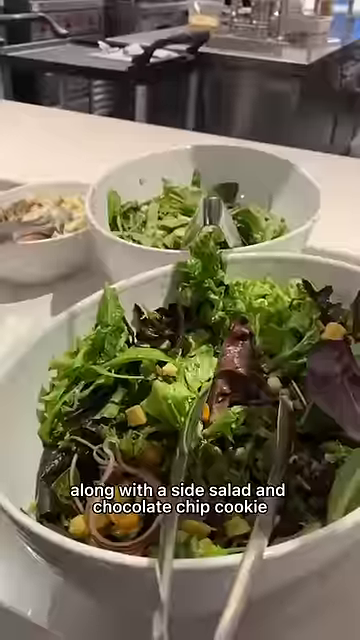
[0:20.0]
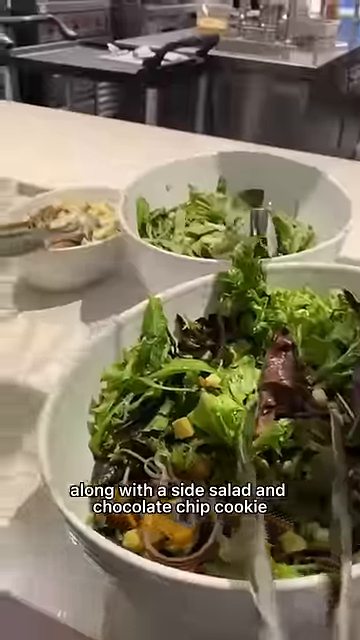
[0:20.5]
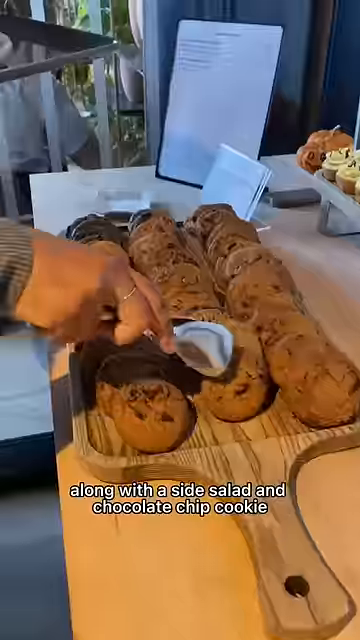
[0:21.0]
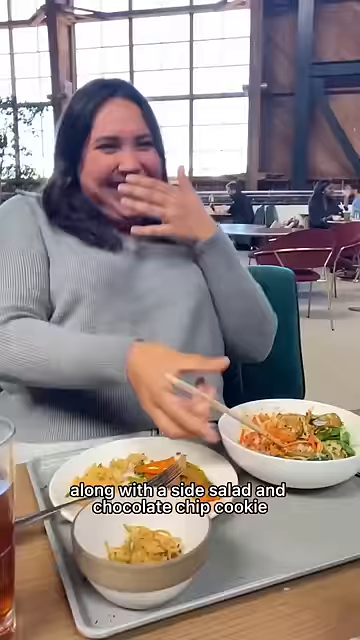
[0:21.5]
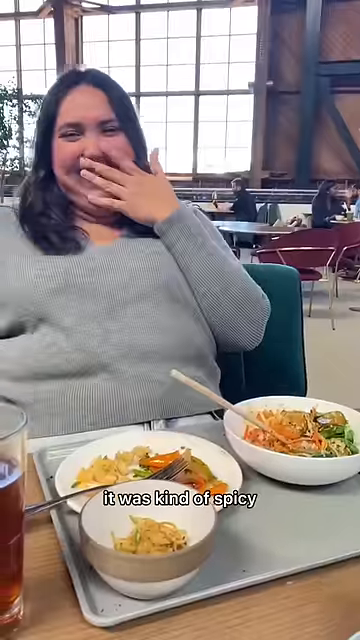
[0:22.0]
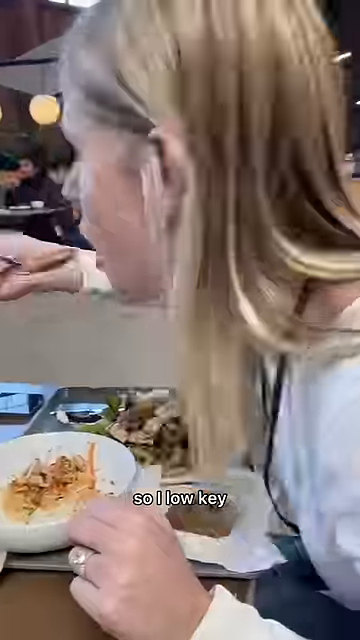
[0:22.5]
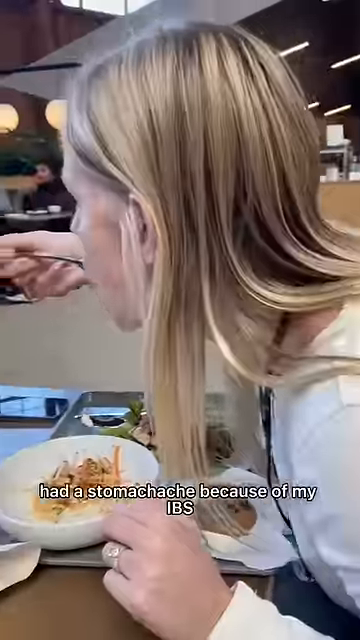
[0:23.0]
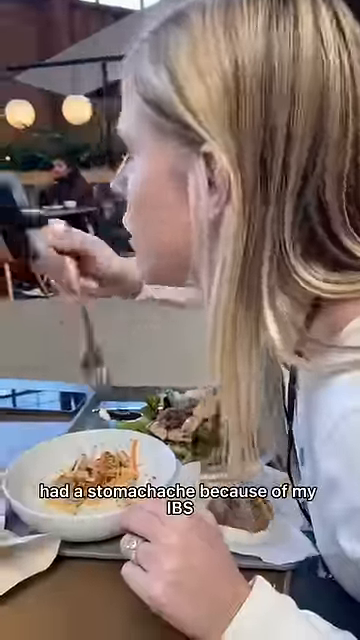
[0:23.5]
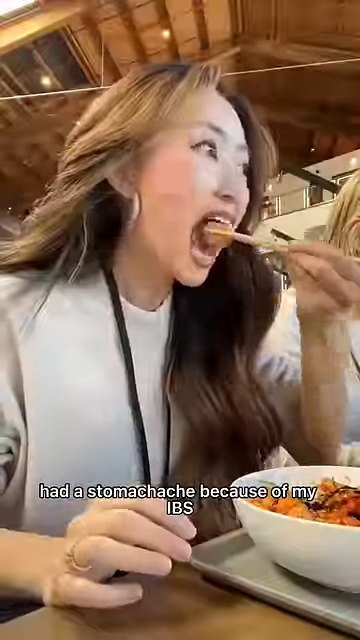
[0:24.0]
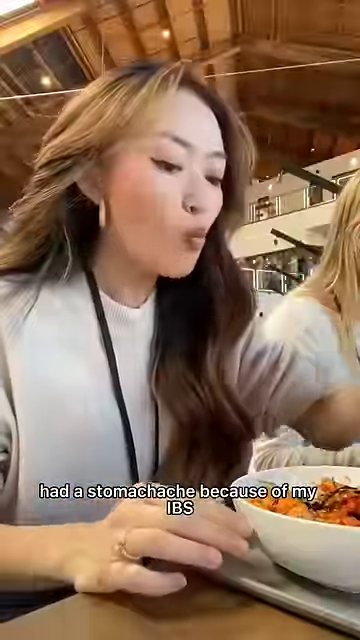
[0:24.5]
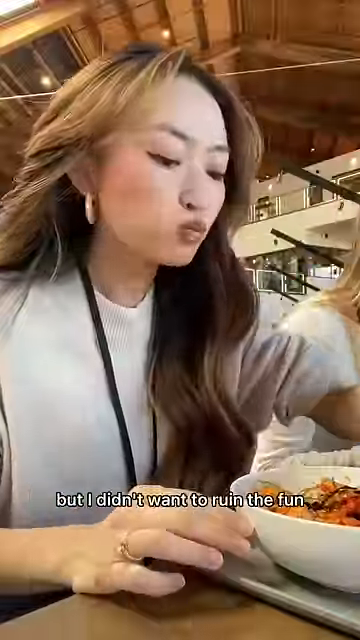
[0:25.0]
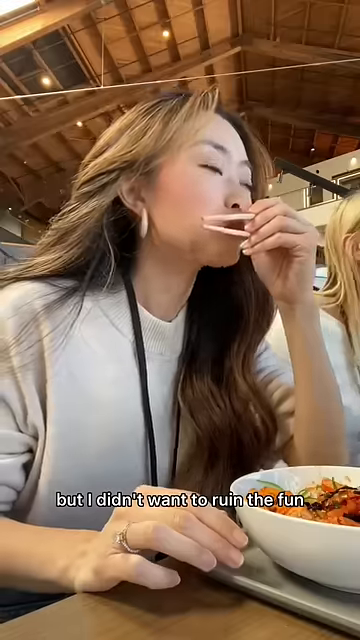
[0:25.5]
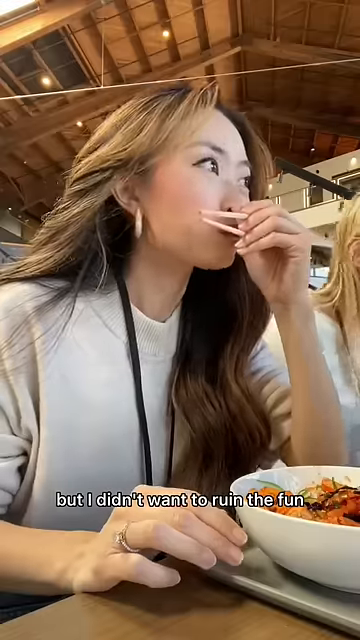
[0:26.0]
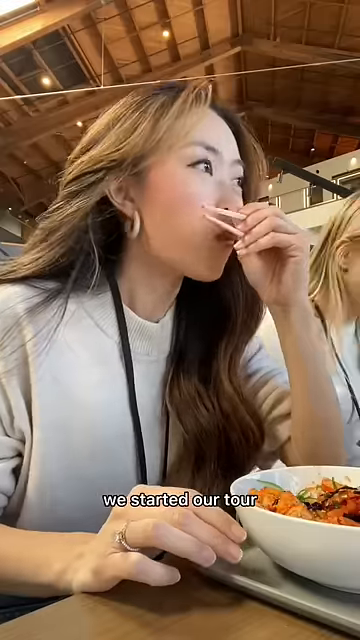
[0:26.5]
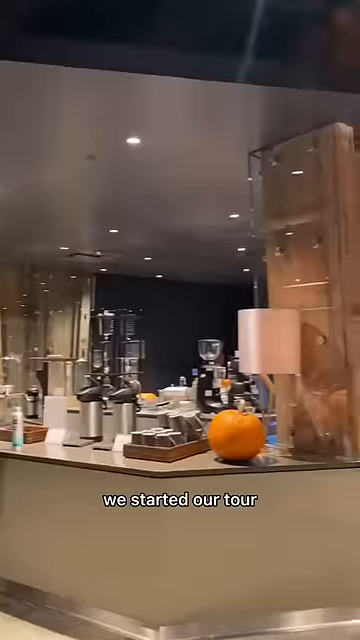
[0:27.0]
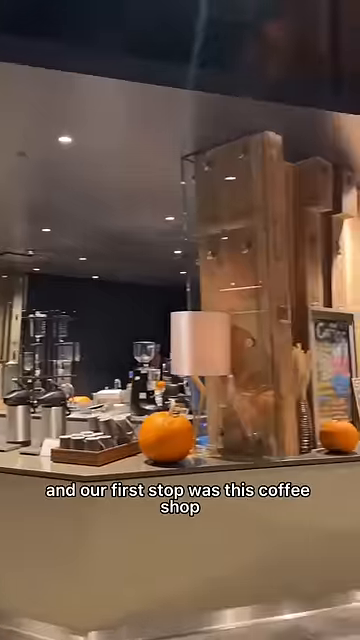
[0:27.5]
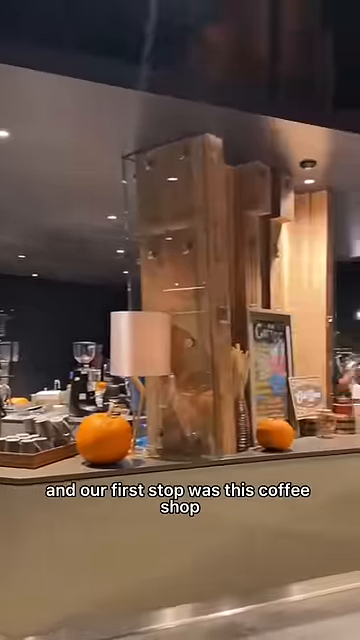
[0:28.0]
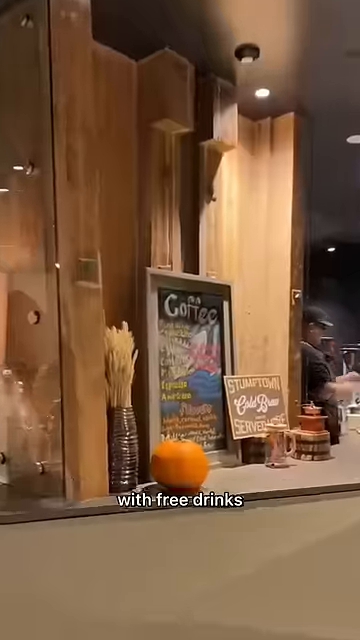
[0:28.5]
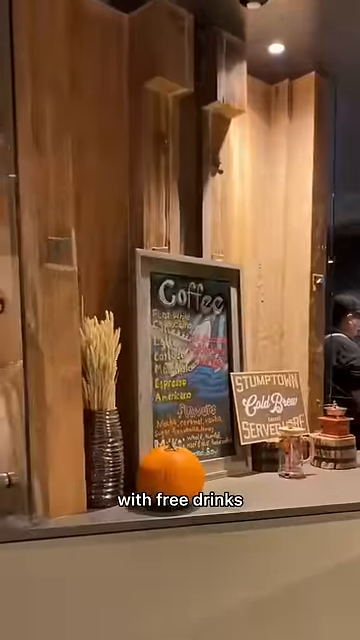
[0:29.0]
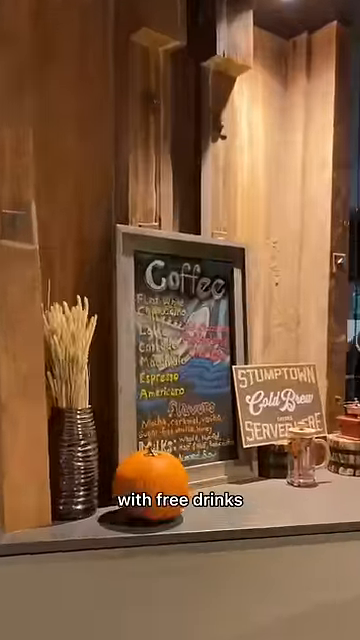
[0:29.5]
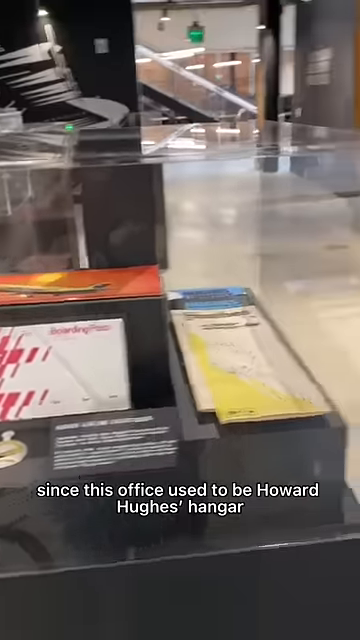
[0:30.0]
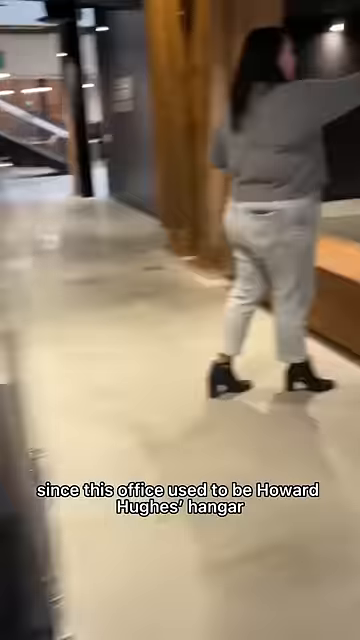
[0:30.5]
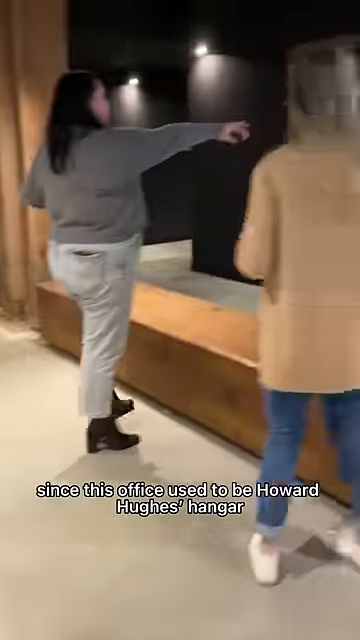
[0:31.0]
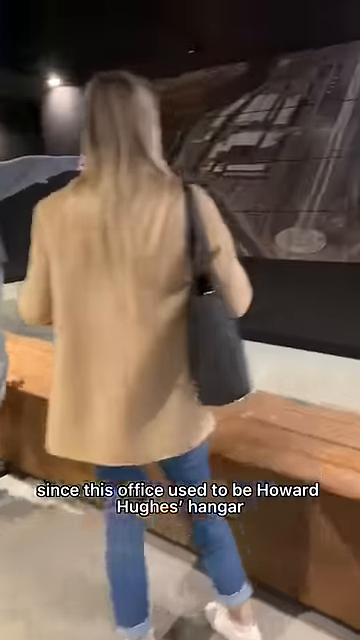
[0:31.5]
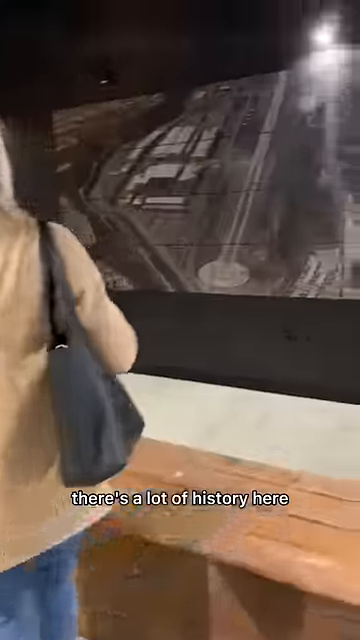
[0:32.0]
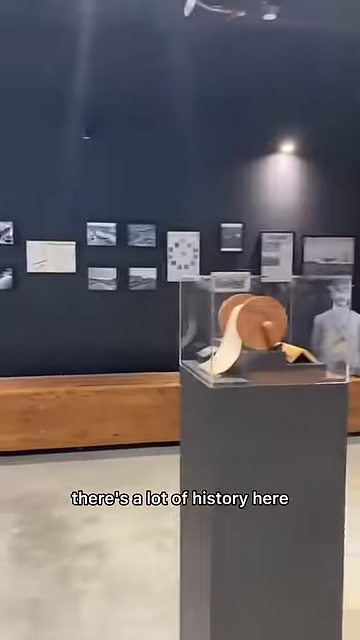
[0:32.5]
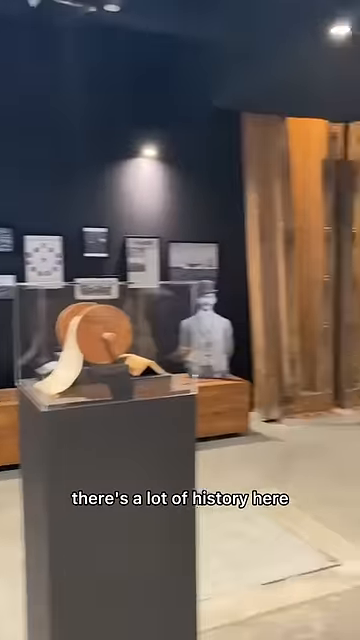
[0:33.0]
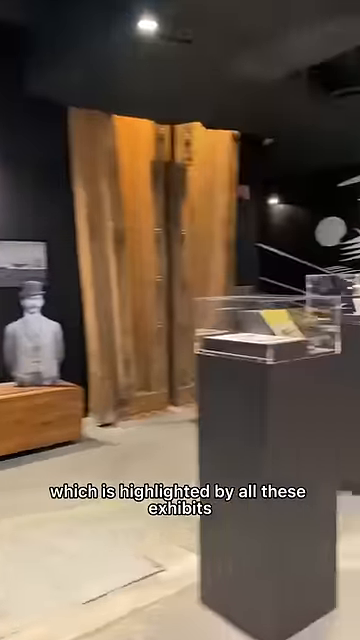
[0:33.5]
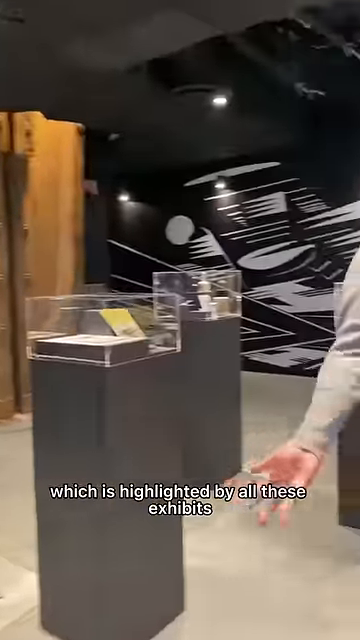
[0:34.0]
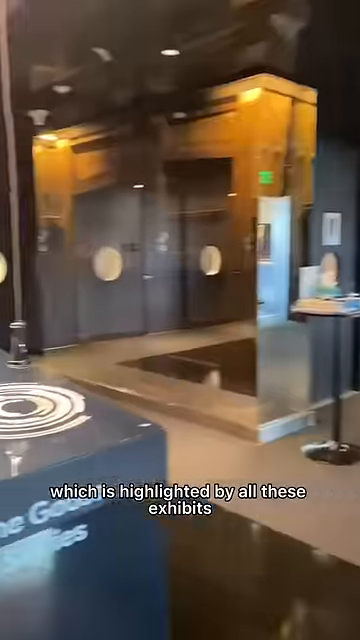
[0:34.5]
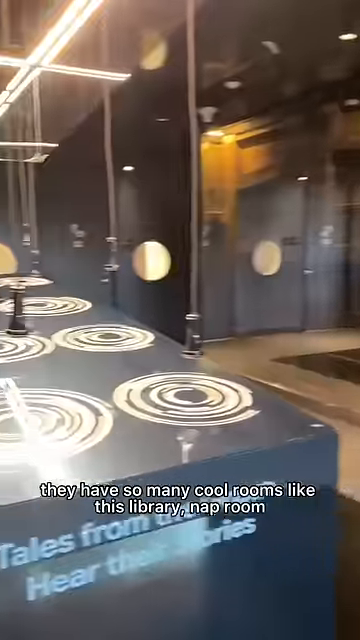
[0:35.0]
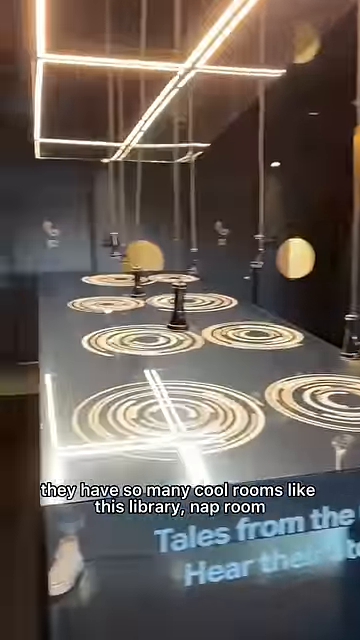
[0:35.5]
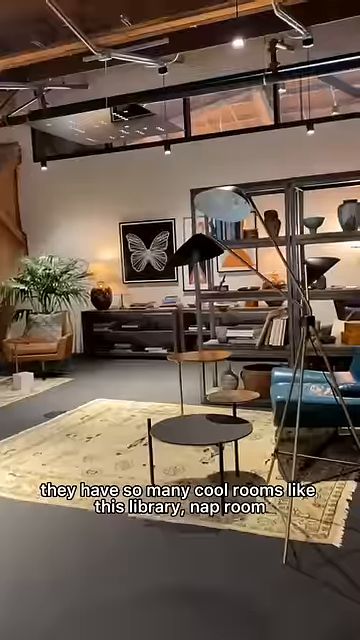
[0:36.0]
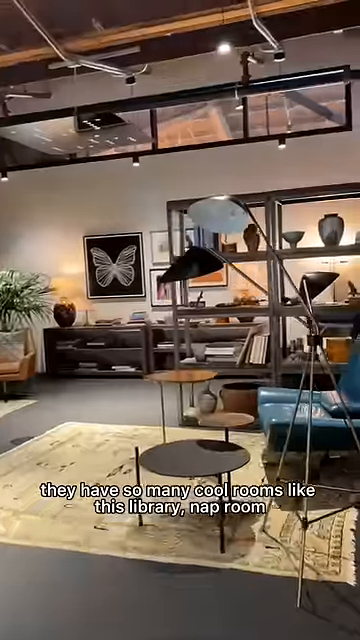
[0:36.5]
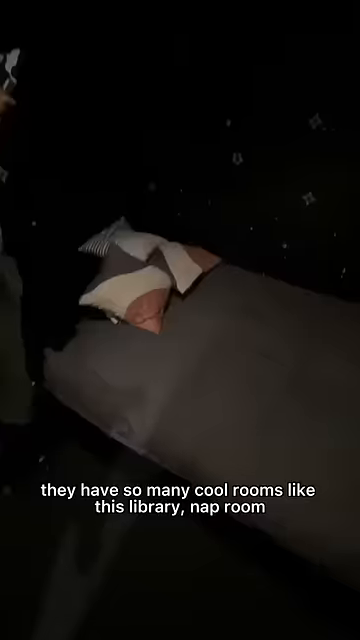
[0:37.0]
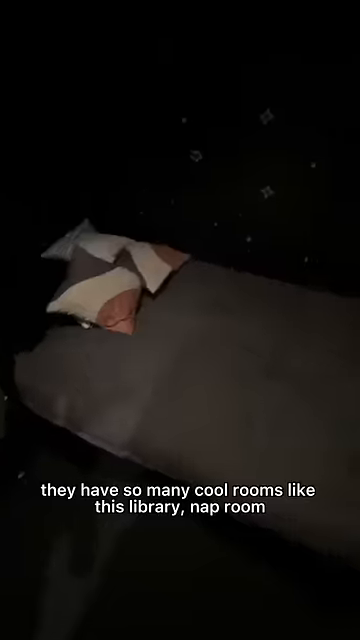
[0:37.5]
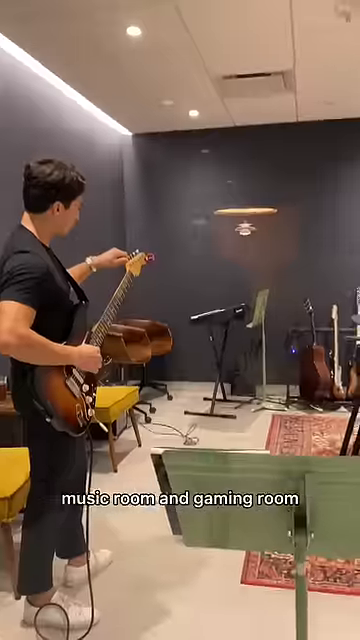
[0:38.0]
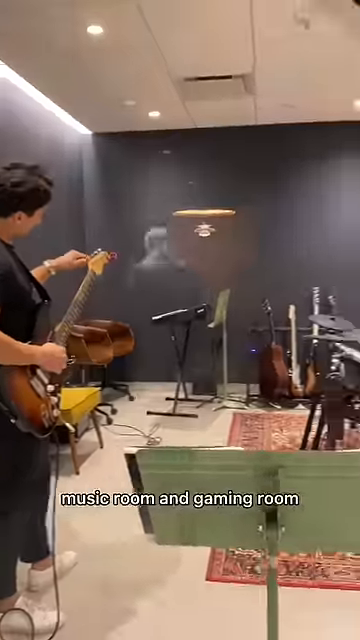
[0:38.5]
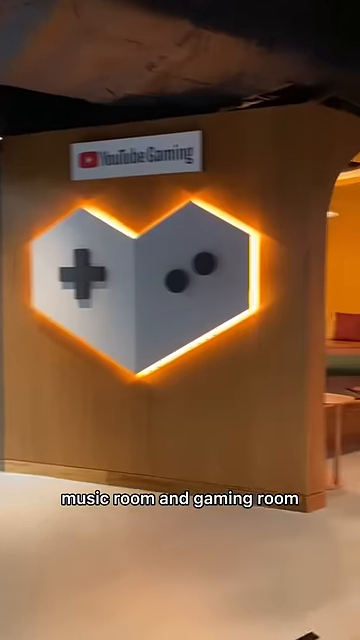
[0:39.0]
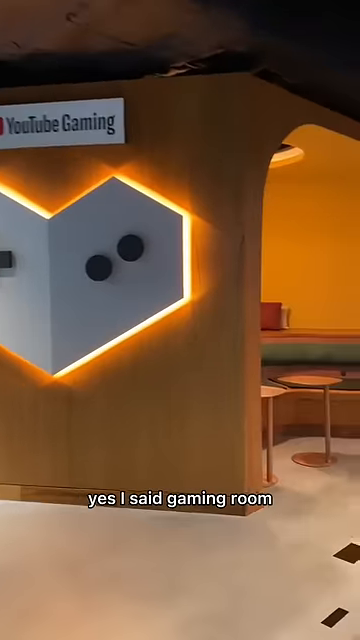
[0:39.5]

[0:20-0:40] A close-up shows a salad bowl containing green and brown salad, with two other bowls of food behind it. The words "along with a side salad and chocolate chip cookie" appear on the screen. A cutting board holding multiple rows of cookies is shown, followed by shots of the women eating and talking. Multiple shots then show different areas of the office: a coffee shop with various items on top of a shelf, an office with history artifacts inside it, a library, and a nap room. There is a potted plant in the background, along with multiple tables, chairs, desks, paintings on the wall, and vases. A music room and a gaming room are also shown.